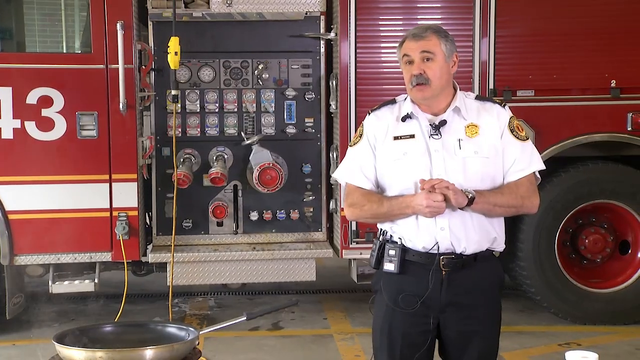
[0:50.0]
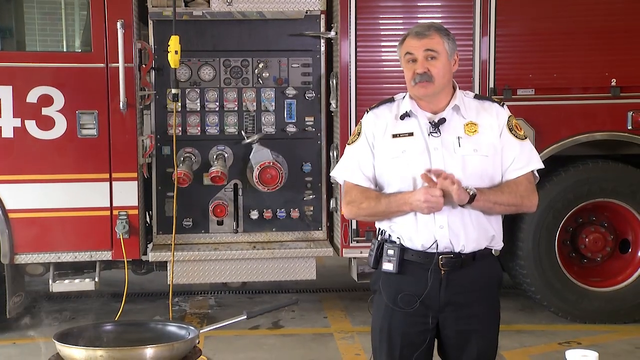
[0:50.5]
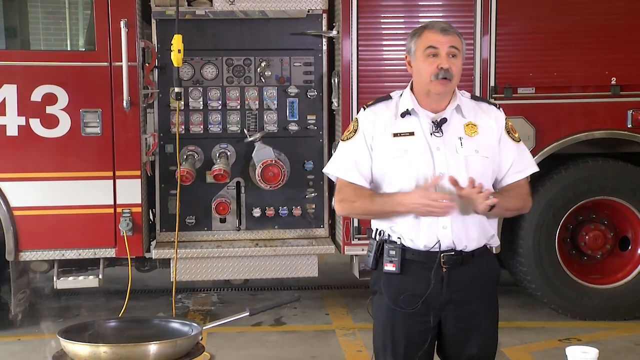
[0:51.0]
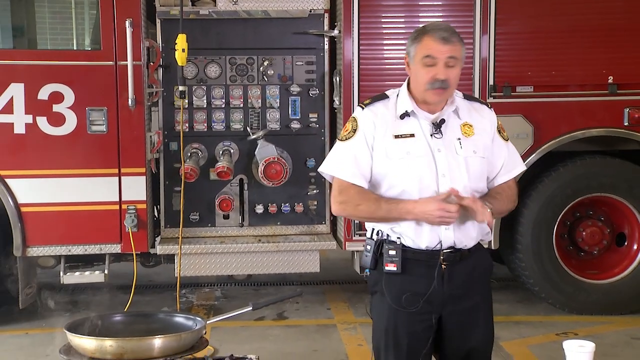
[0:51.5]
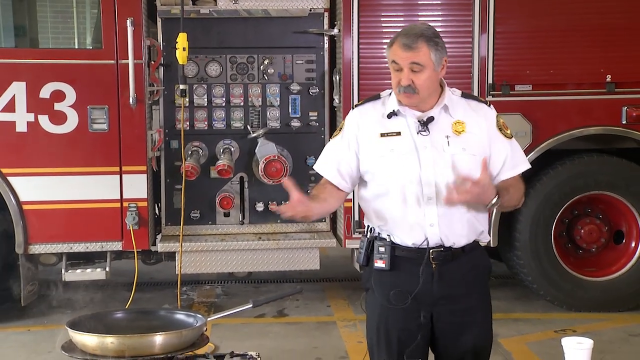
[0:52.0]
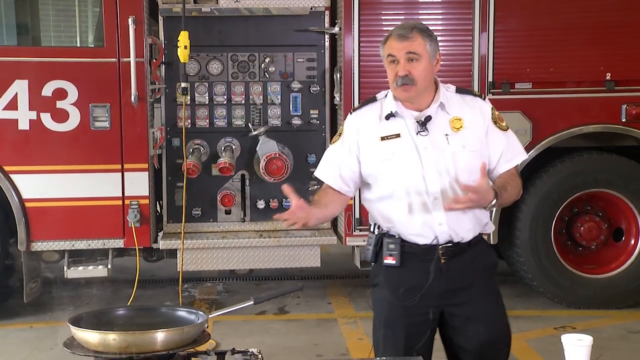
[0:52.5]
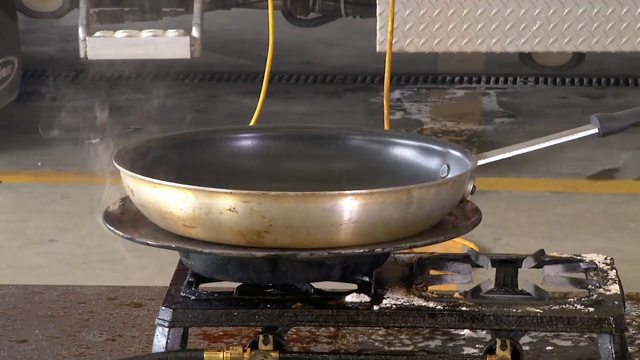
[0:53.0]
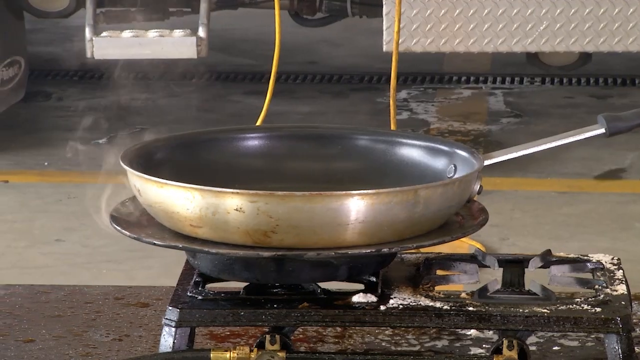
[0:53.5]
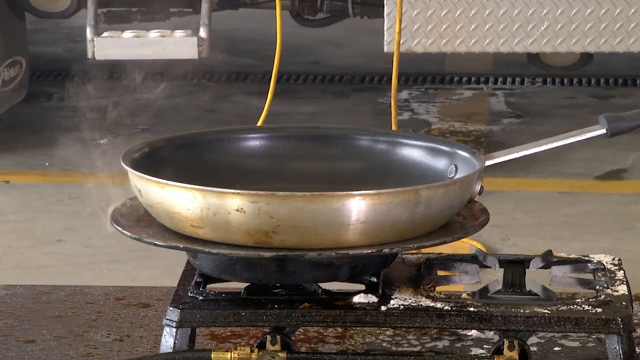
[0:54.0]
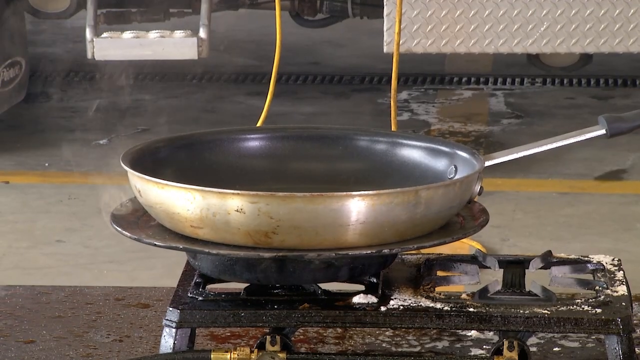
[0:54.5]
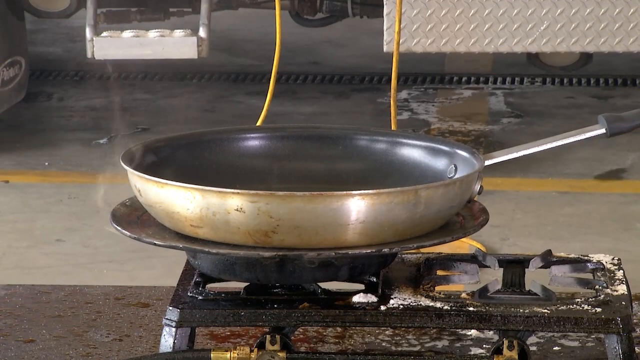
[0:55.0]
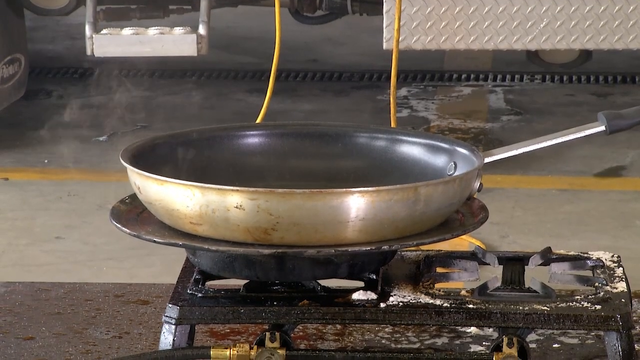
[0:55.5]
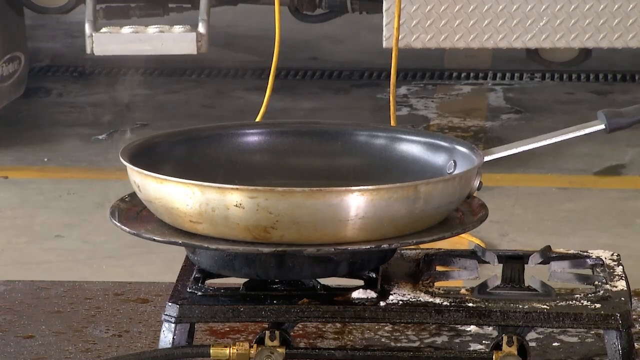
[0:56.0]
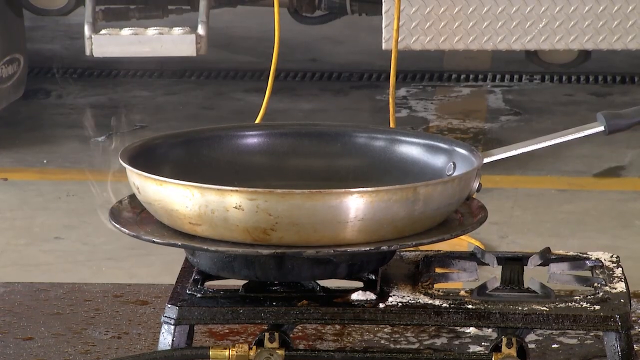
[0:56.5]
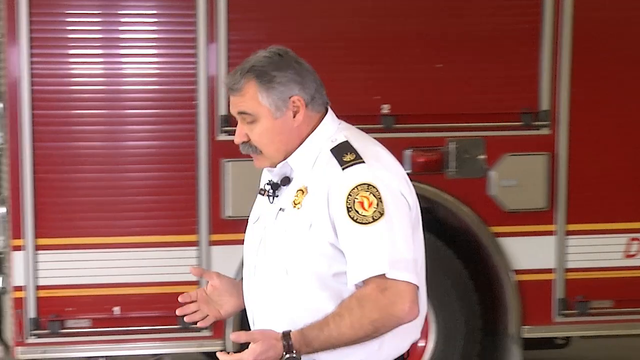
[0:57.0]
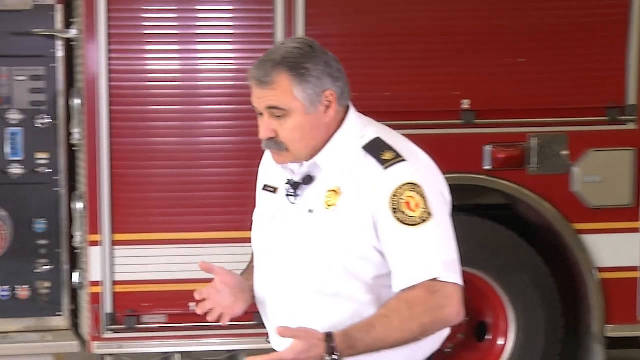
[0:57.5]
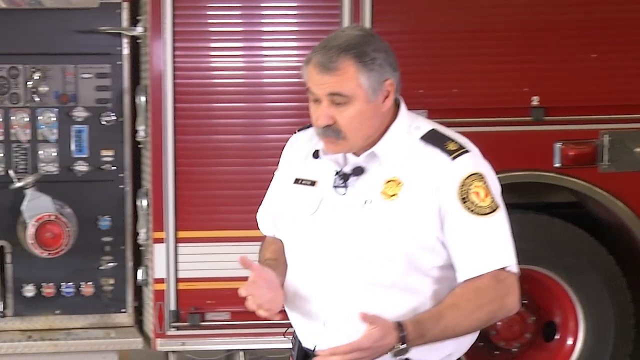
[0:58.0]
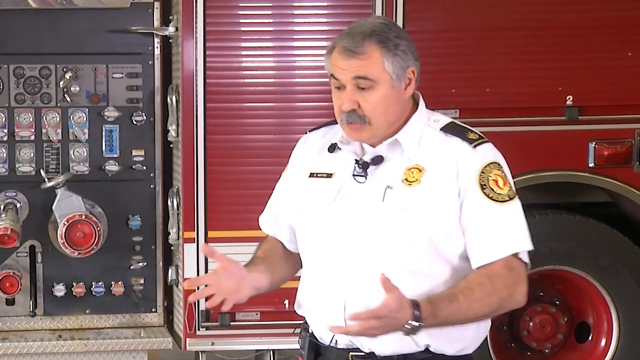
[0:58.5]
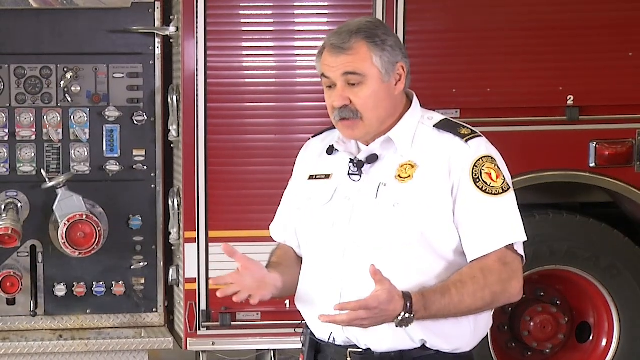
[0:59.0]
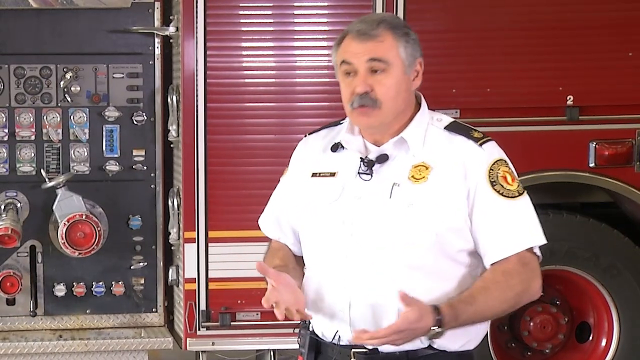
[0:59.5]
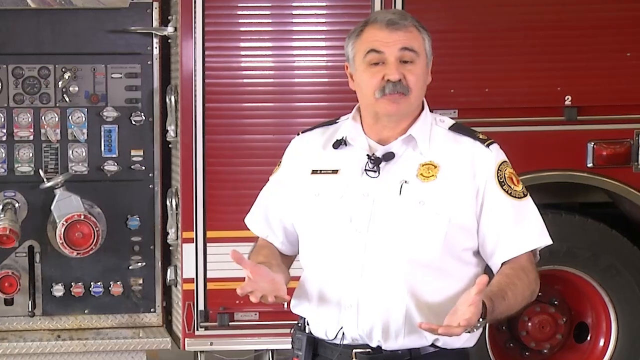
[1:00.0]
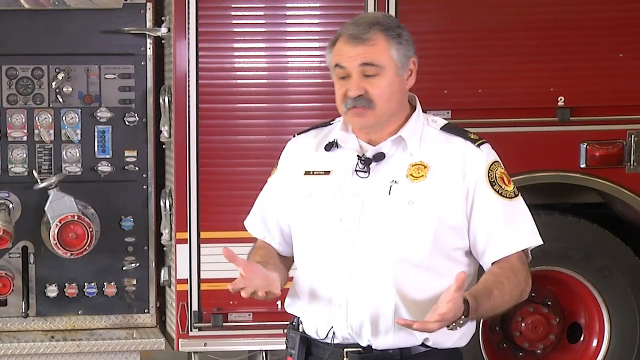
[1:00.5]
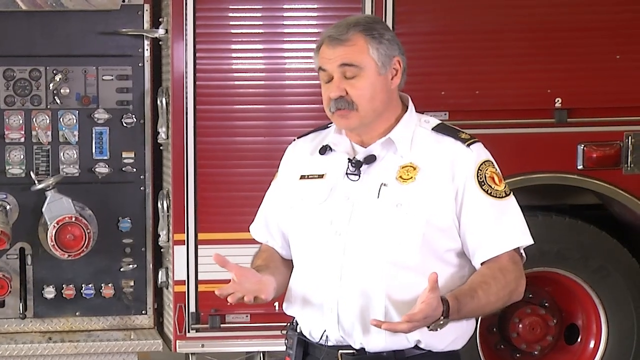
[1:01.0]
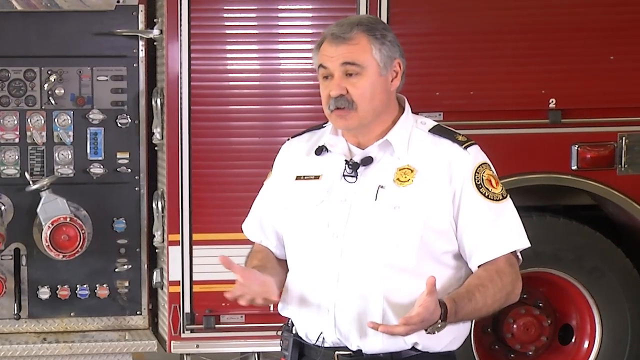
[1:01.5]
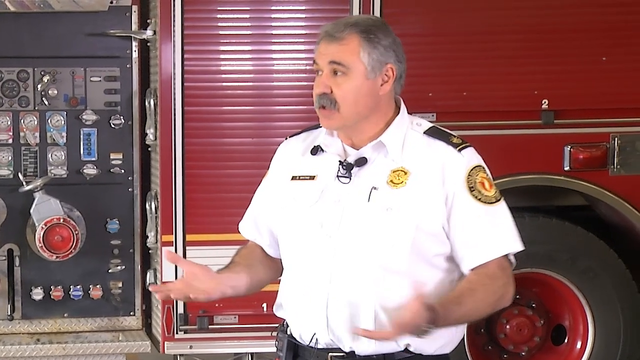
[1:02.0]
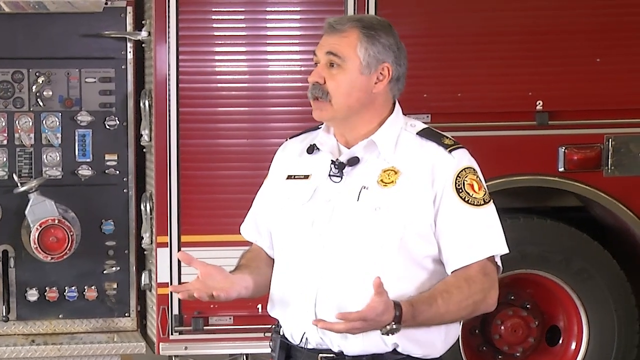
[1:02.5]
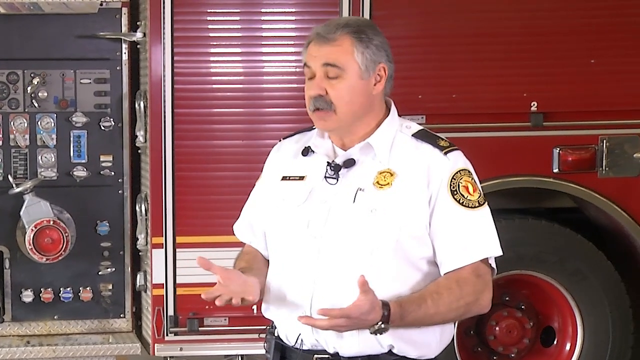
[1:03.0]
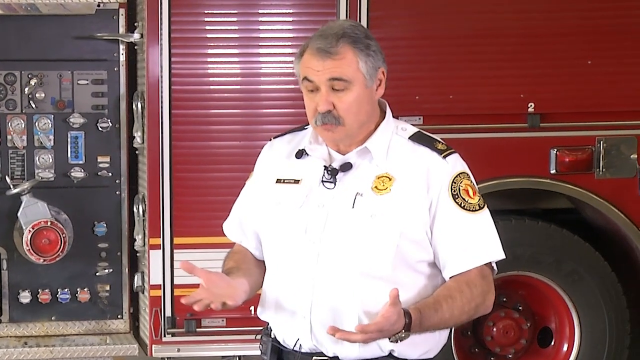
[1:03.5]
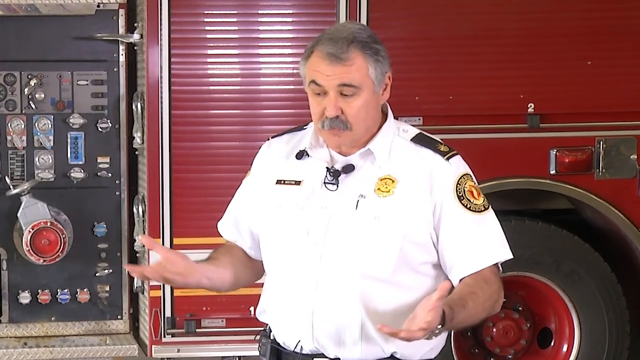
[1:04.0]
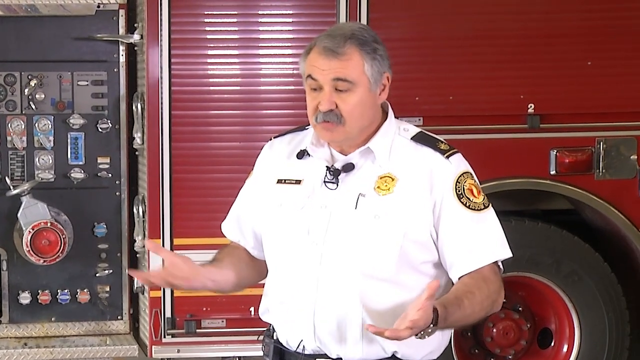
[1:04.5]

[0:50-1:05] The assistant fire chief continues talking, gesturing a lot with his hands. A close shot shows the two pans stacked, and the round baking tray seems to be between the two pots, which did not appear to be the case when he put the fire out. The pans also appear to have been moved to the other burner, the one that was not used to heat the oil. Quite a bit of smoke curls out, particularly on the left side of the frame, from underneath the round metal tray, possibly a pizza tray, coming from the bottom of the pan. There is a little tinfoil around the base of the burners. The fire truck is in the background with its cab facing the left side of the screen, giving a clear view of its instrument panels, hose coupling areas, and some of its rims; the rear left rim is painted bright red, matching the truck's paint.